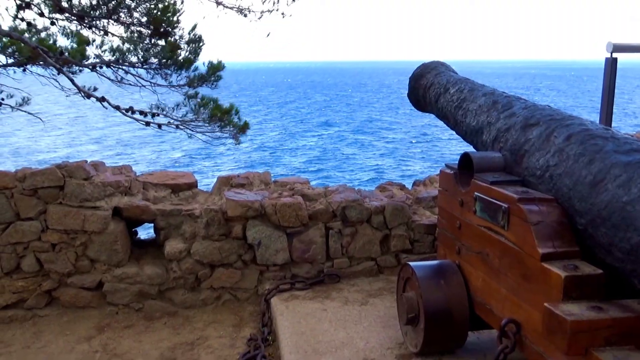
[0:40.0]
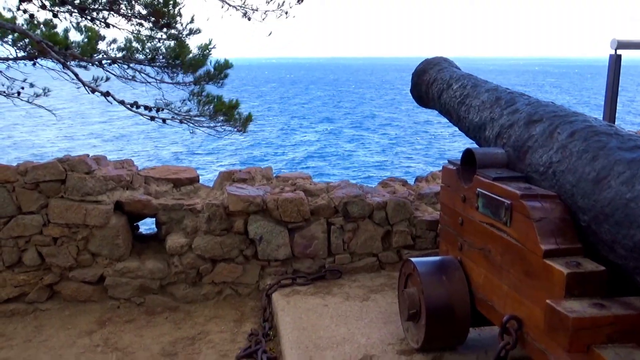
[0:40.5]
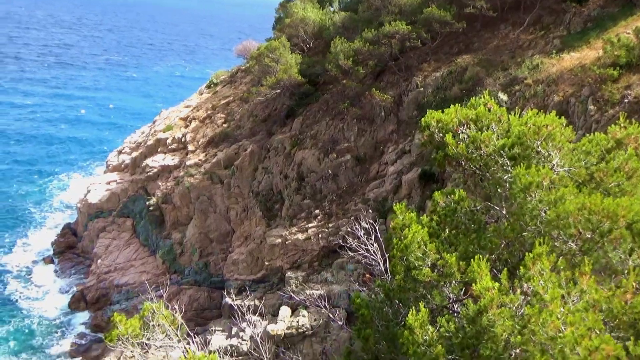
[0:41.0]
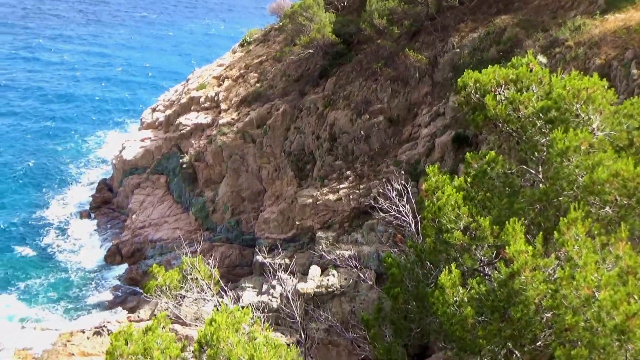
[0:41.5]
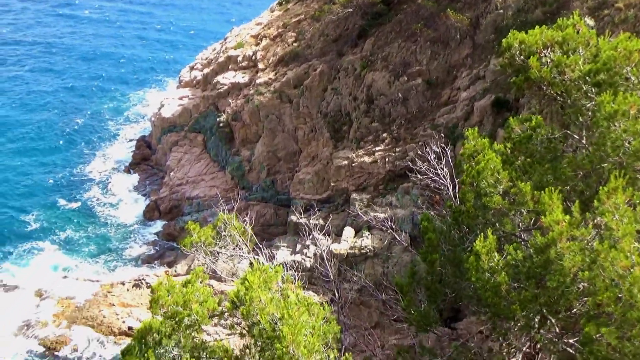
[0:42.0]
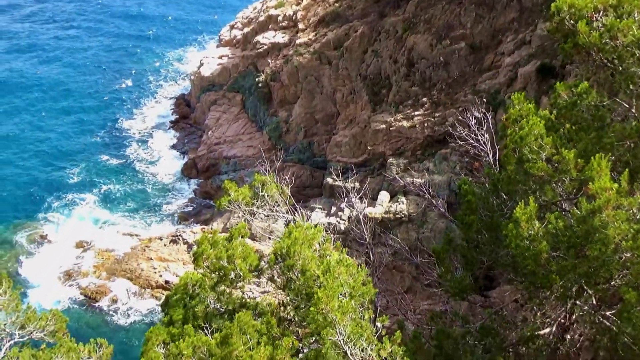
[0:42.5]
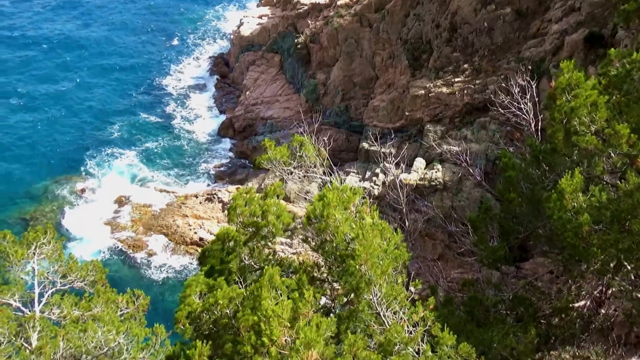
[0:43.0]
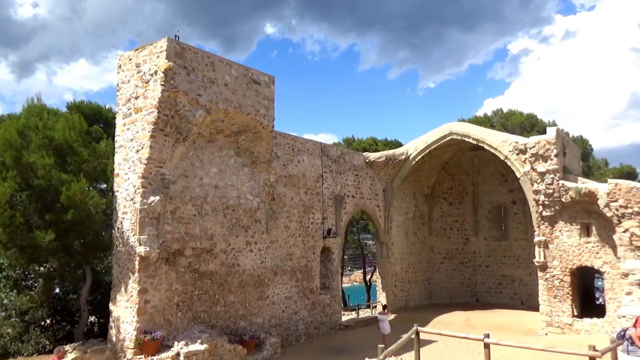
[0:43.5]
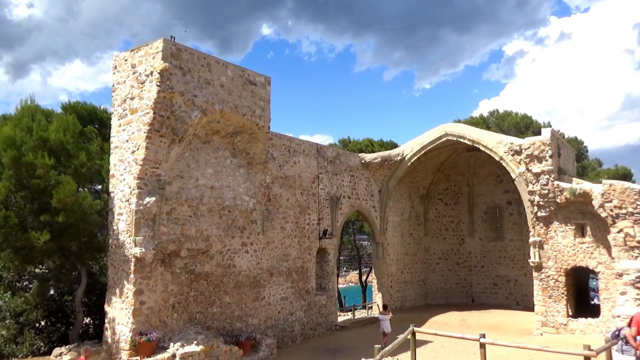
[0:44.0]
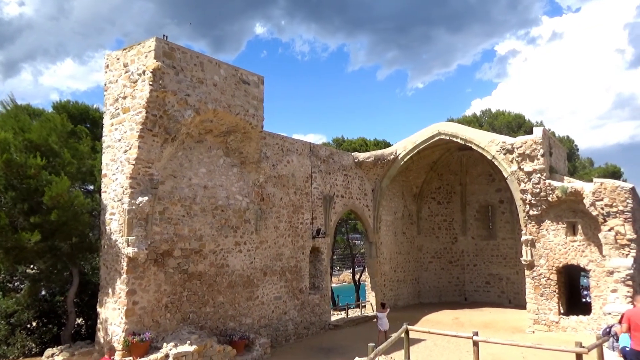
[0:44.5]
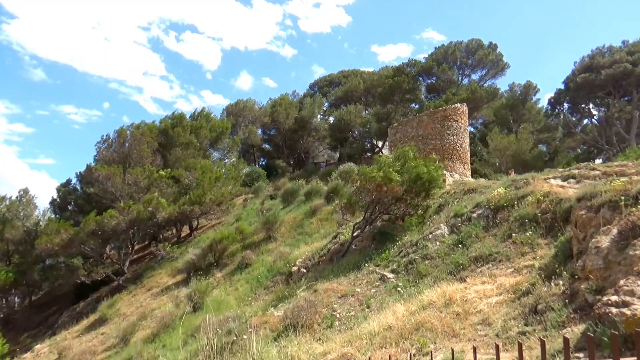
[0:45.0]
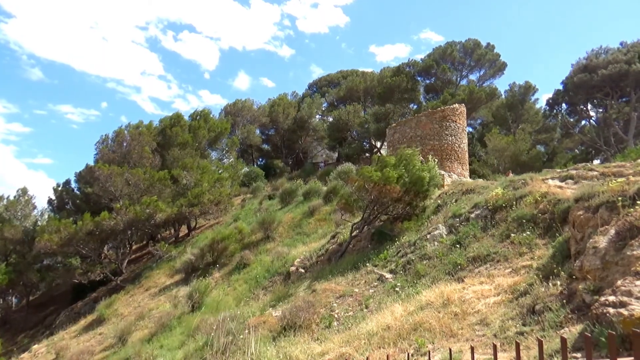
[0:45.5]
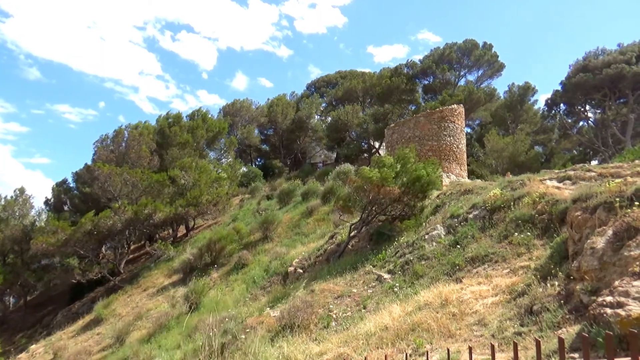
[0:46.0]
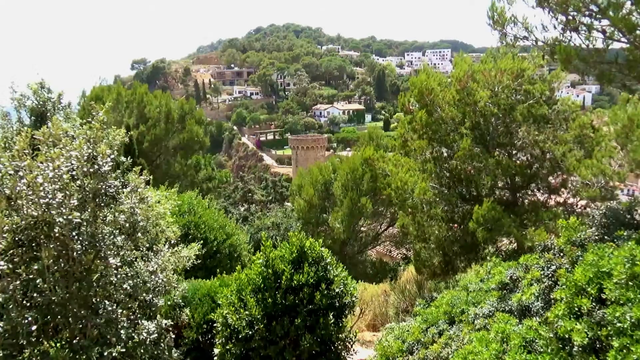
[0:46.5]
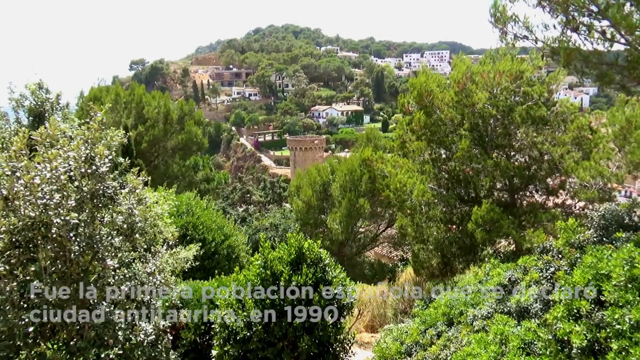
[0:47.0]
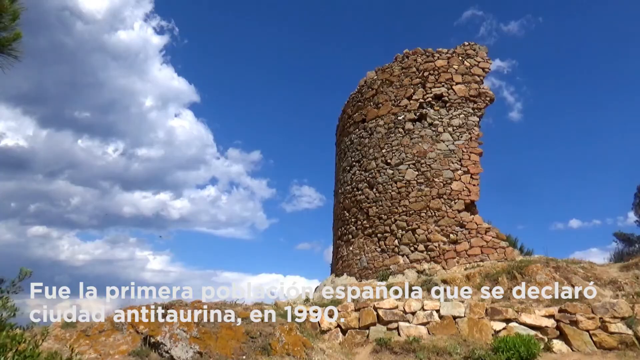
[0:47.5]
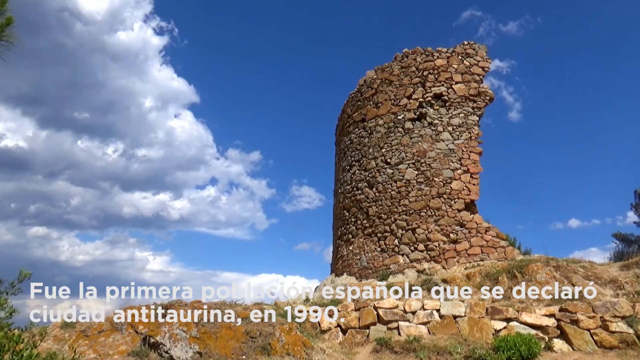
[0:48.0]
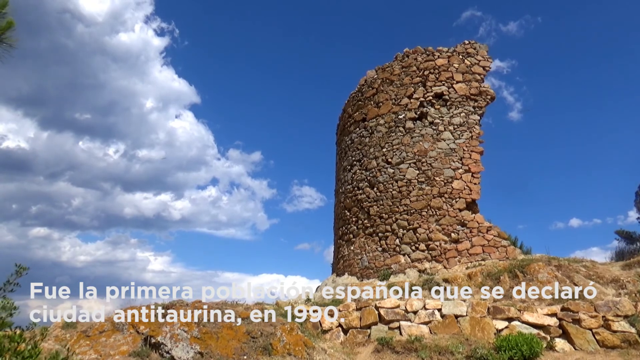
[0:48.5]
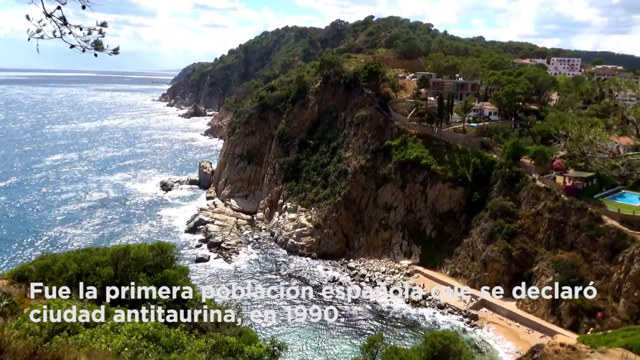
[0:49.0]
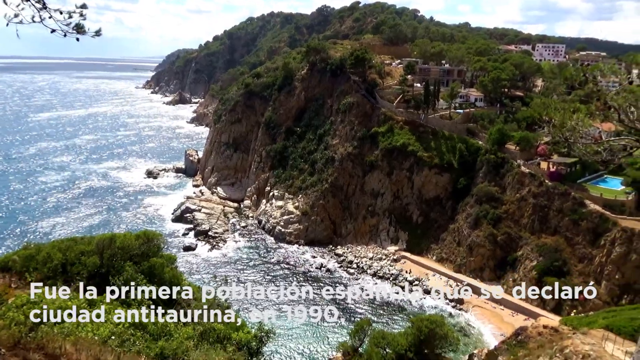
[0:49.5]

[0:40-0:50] A cannon overlooks the ocean in front of a slightly degrading rock wall, with a tree on the left side of the picture; the cannon looks mostly decorative. The shot jumps to the ocean lapping up against the mountain ranges of the area, then to old architecture: curved stonework and brickwork forming a wall that might have been used for defense at some point. Rolling, cascading hills, lots of water and lots of mountains appear.